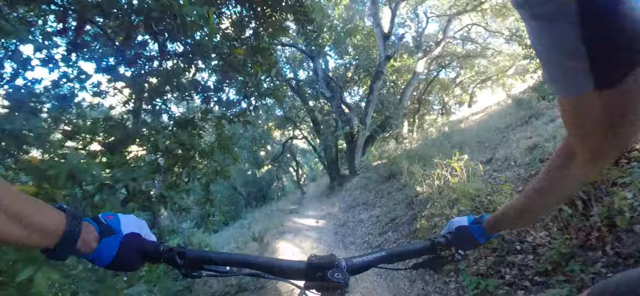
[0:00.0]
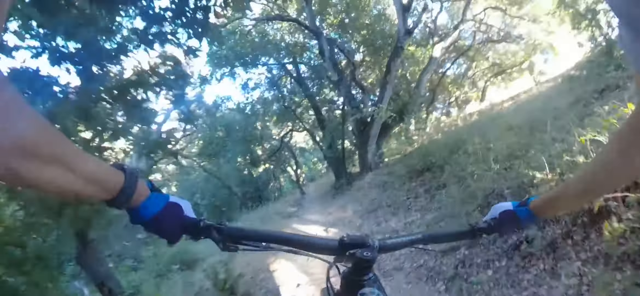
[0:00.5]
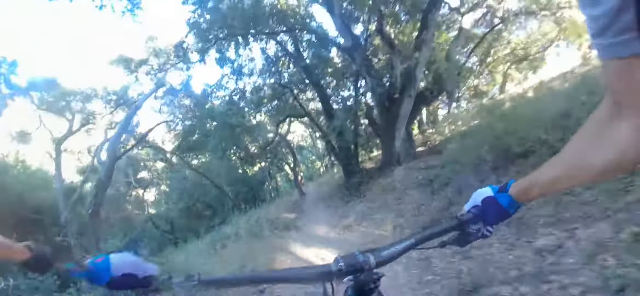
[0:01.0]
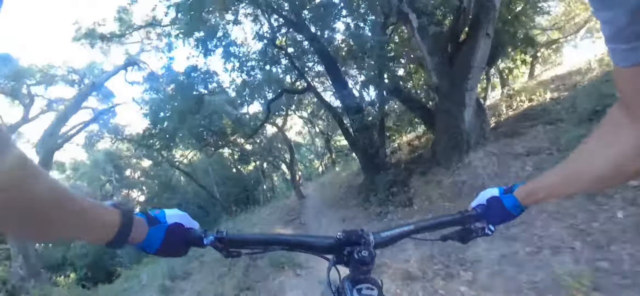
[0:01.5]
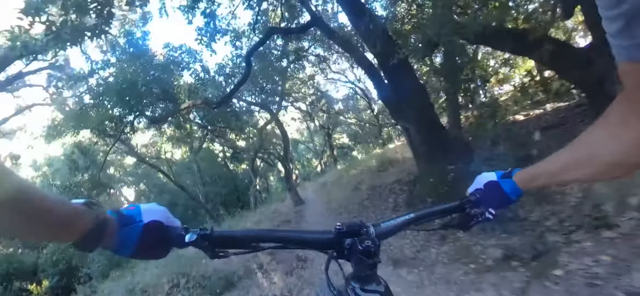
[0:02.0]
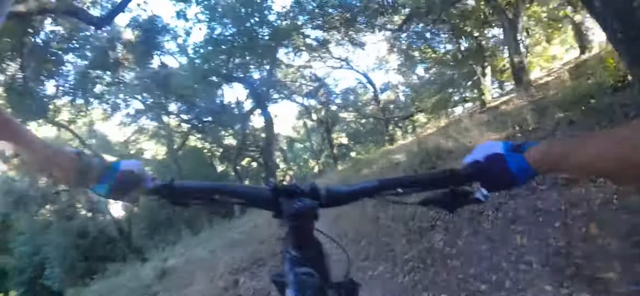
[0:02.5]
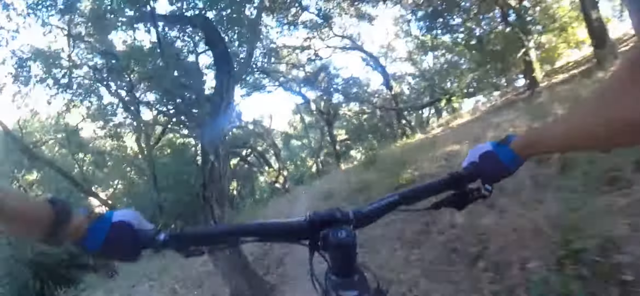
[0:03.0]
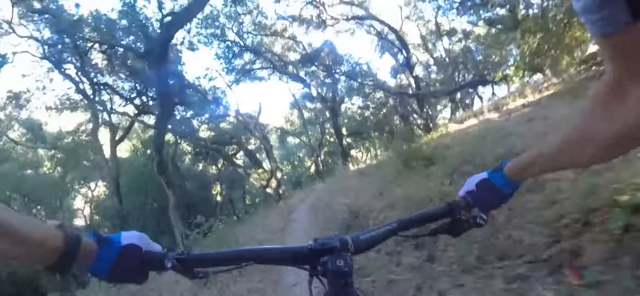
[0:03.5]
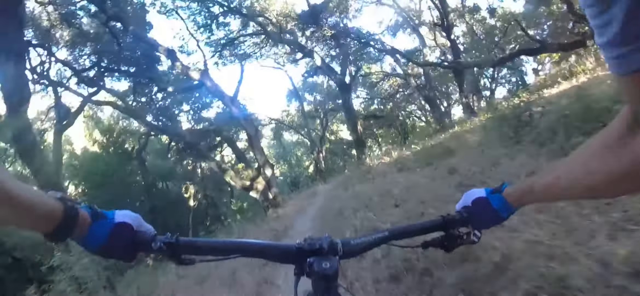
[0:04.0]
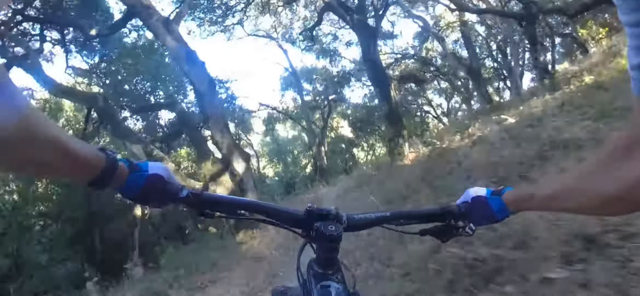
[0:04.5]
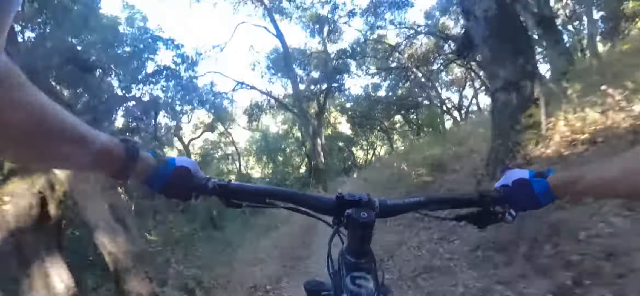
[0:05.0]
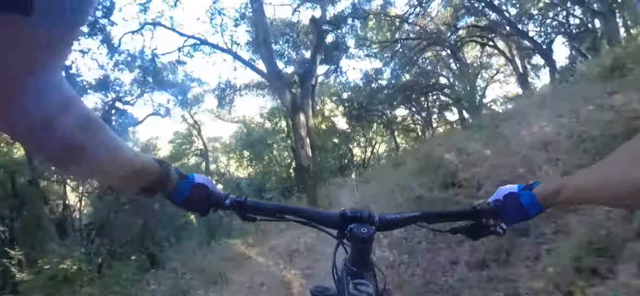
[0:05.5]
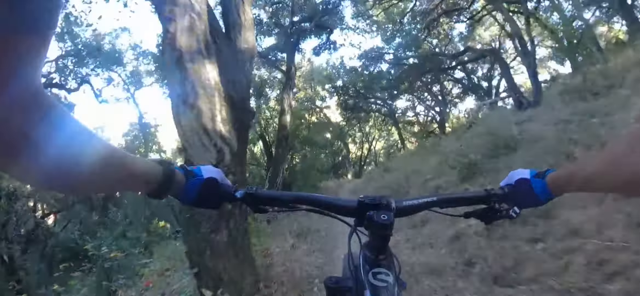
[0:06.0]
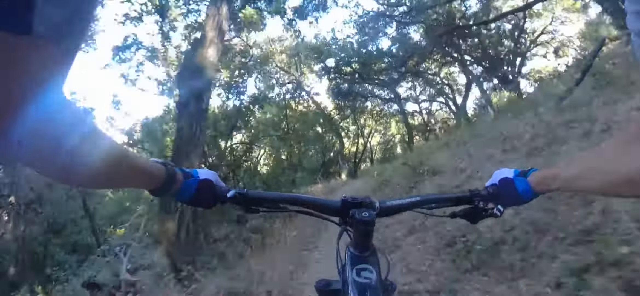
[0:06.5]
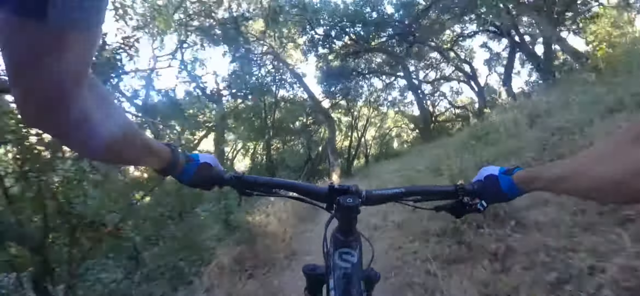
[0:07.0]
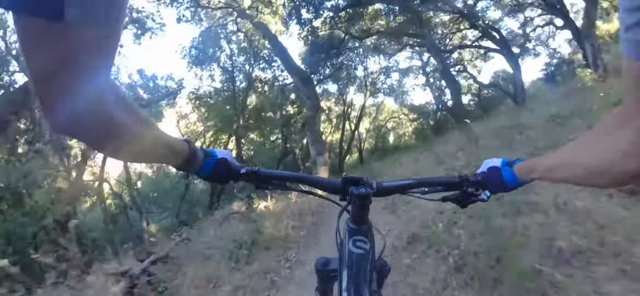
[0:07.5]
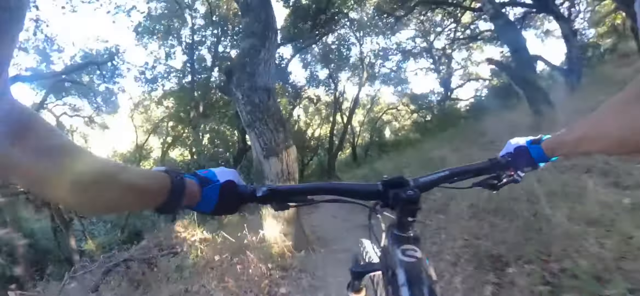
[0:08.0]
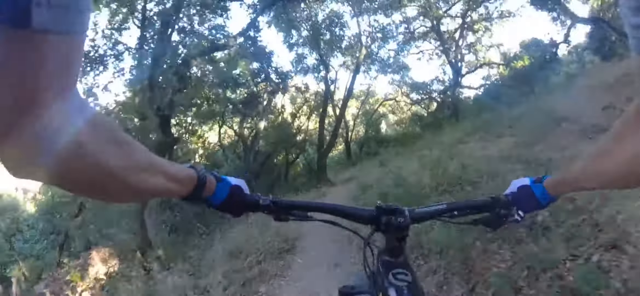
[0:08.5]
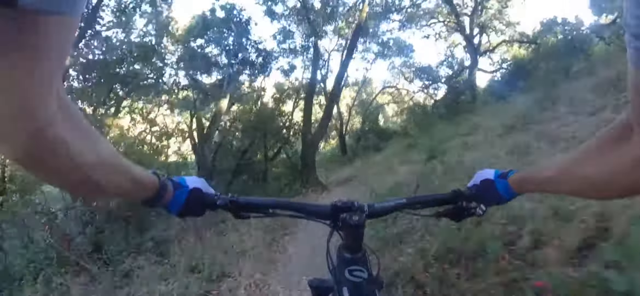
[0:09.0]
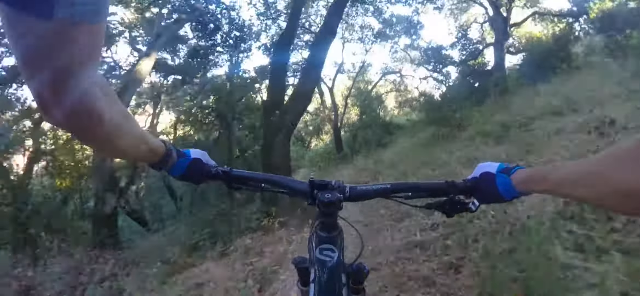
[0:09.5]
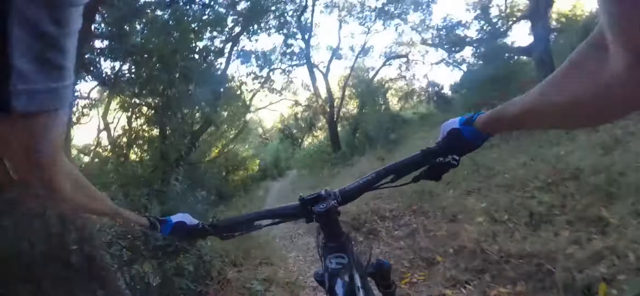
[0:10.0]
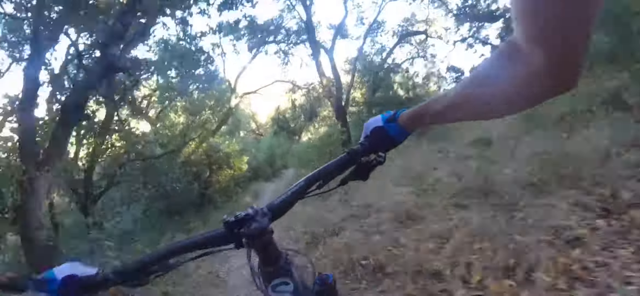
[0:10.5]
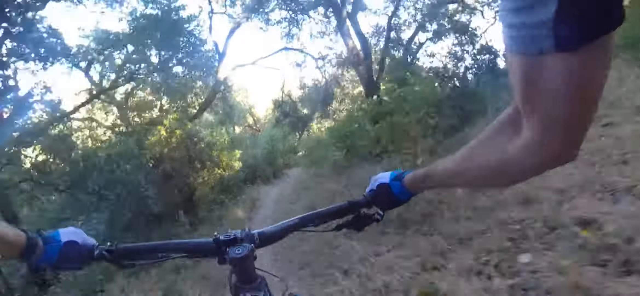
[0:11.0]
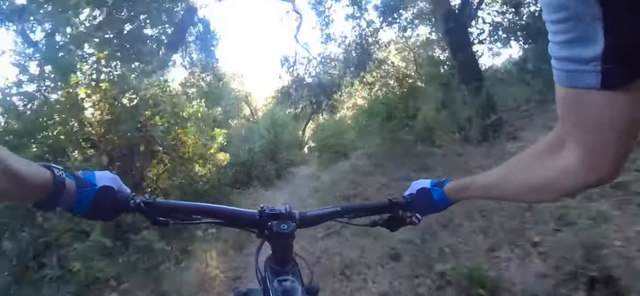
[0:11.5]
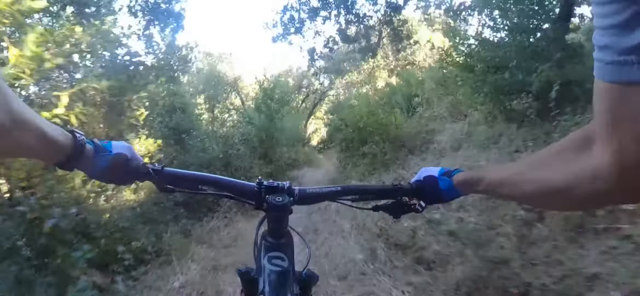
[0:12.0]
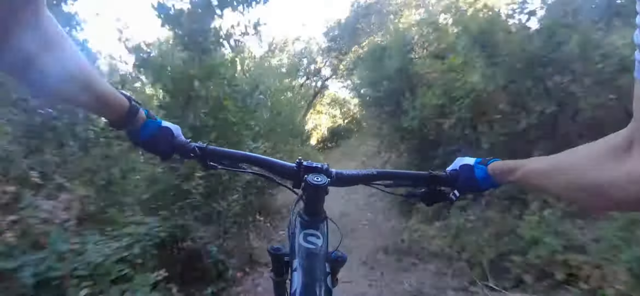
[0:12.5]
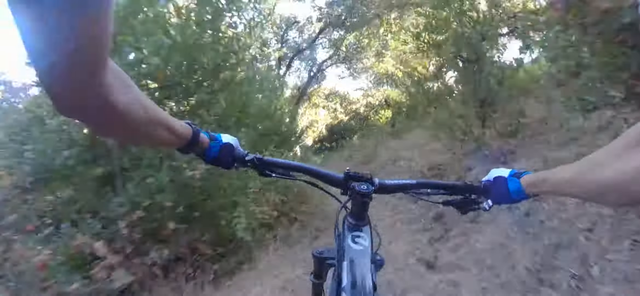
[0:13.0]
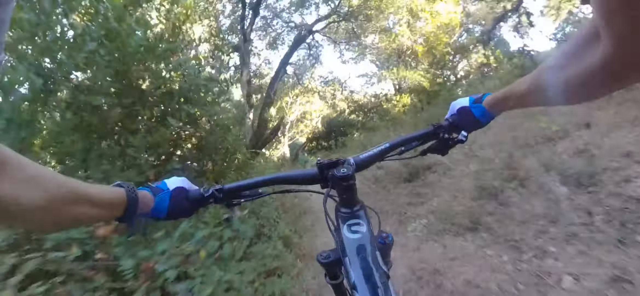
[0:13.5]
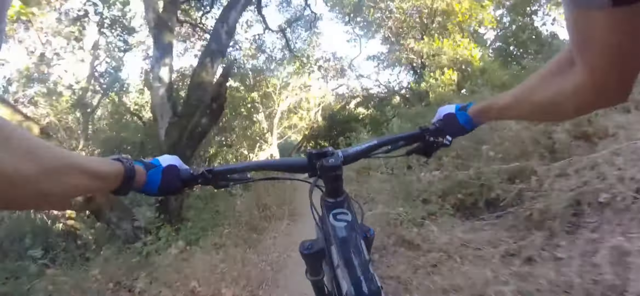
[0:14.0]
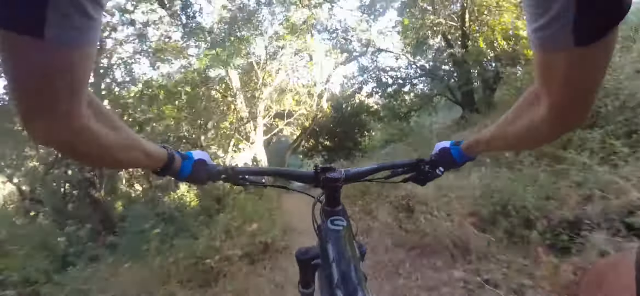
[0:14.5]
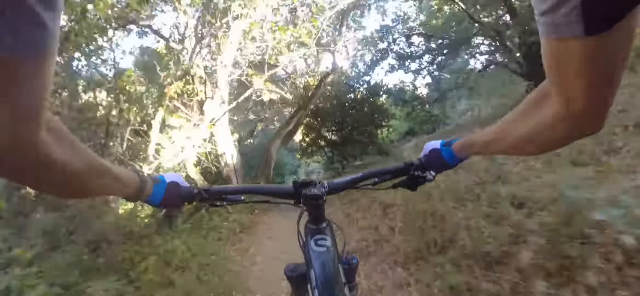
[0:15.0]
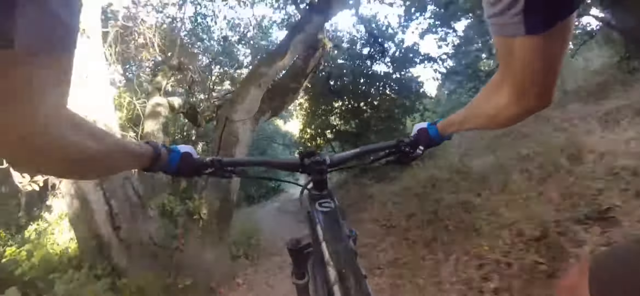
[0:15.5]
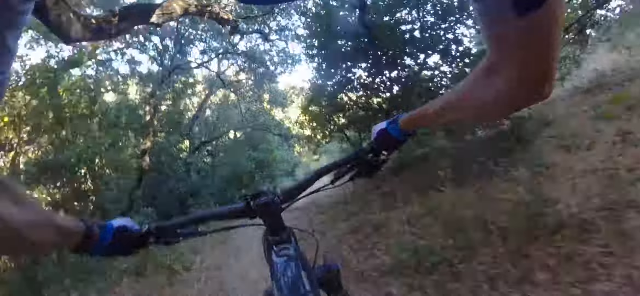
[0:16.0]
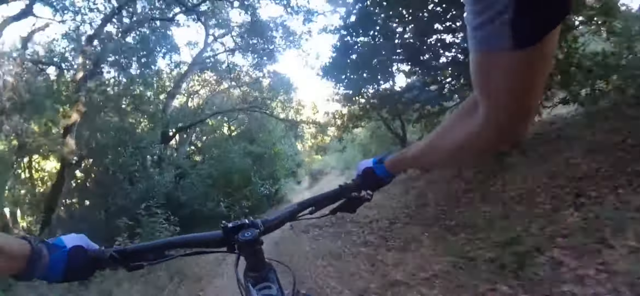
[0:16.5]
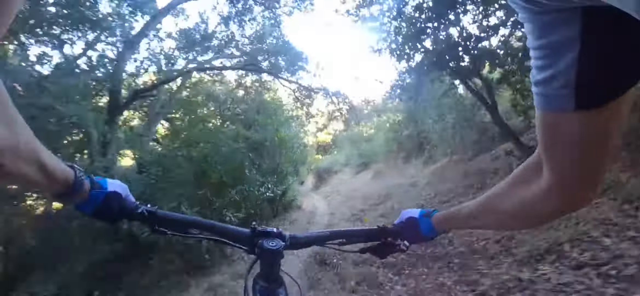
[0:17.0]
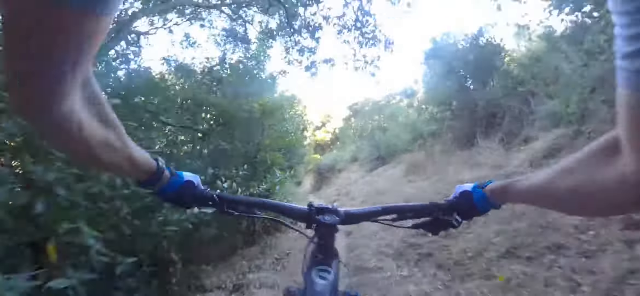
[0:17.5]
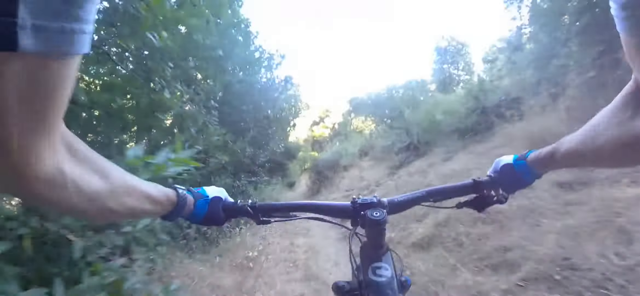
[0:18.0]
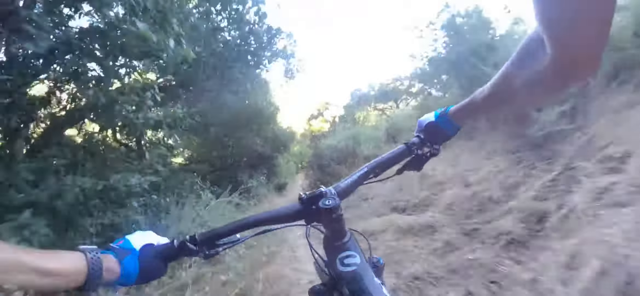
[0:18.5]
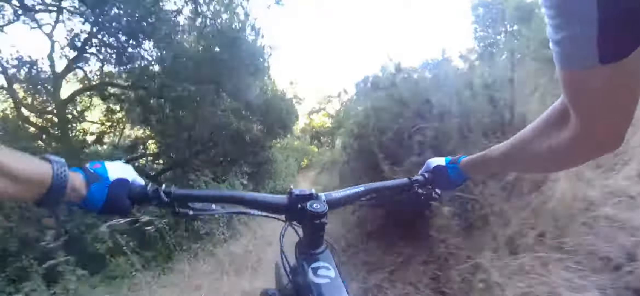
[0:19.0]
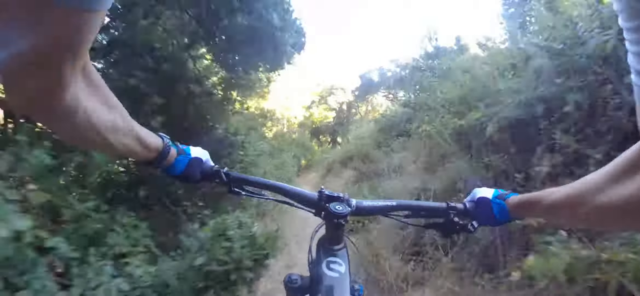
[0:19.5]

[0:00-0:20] A white cyclist in a short-sleeved shirt that looks to be two shades of blue, light blue and dark blue, rides a black bike. His gloves are two shades of blue, darker blue around the palm area and a lighter blue around the knuckles, and he has a black wristband around his left wrist. He rides through a forested area on a path that seems to be brown, with trees and brush all around him. The path is very bumpy, and he goes over tree vines, rocks and uneven ground, seemingly moving very quickly. The sun peers through the trees of the hilly area, and some areas are darker than others where the leaves of the trees create shade.